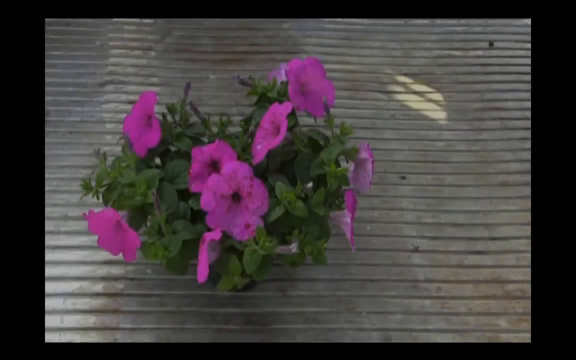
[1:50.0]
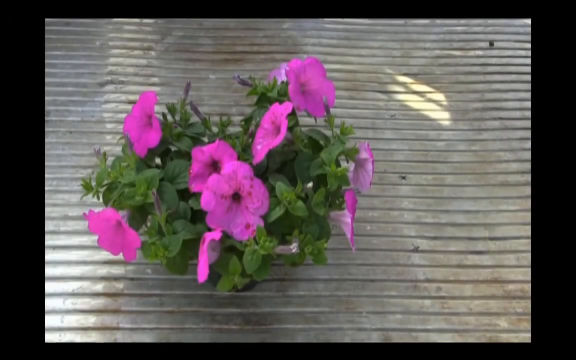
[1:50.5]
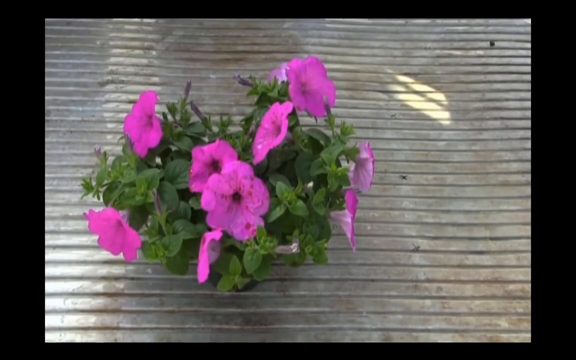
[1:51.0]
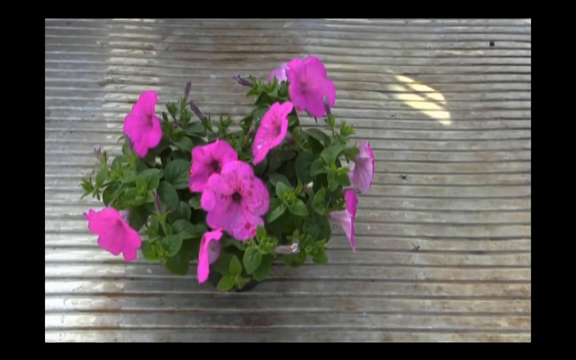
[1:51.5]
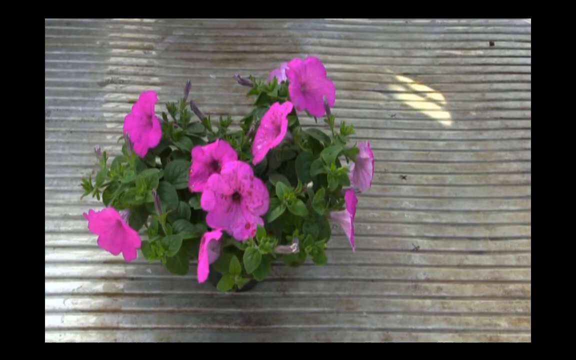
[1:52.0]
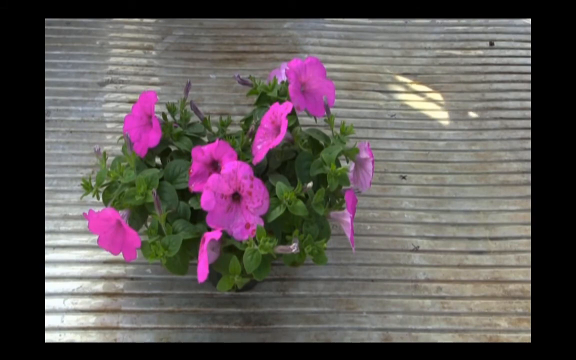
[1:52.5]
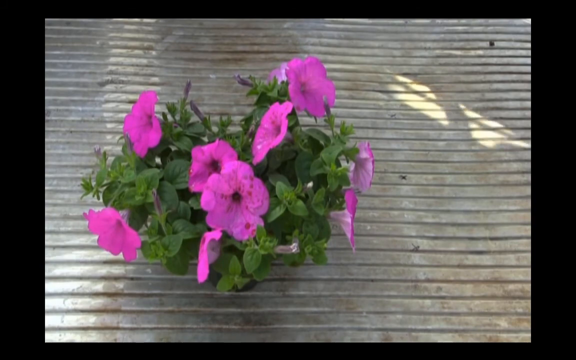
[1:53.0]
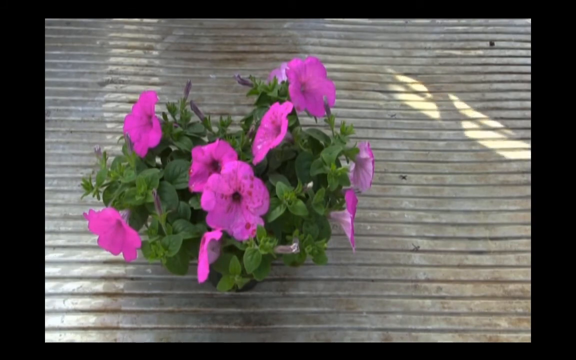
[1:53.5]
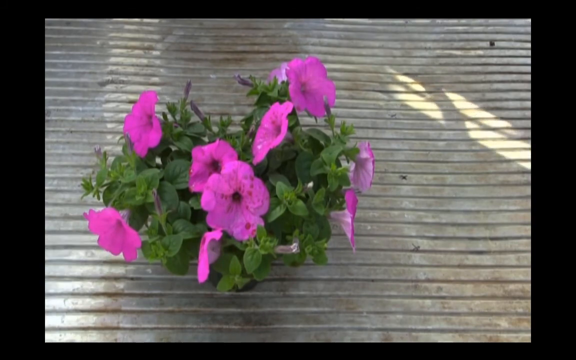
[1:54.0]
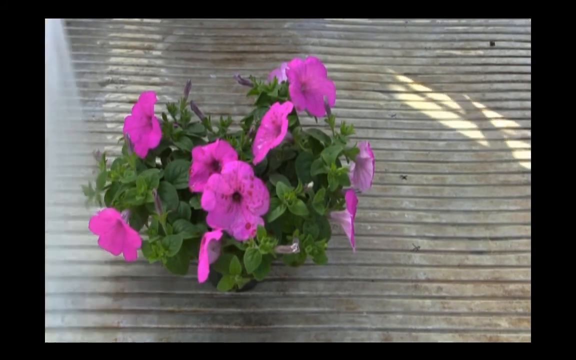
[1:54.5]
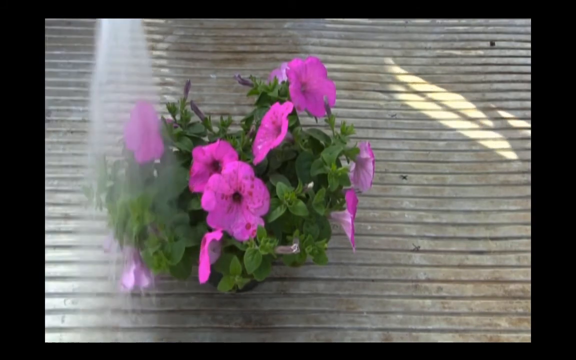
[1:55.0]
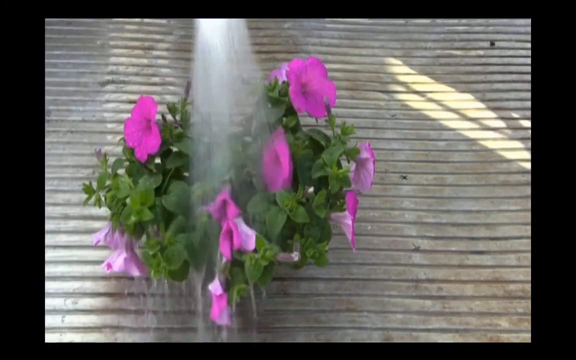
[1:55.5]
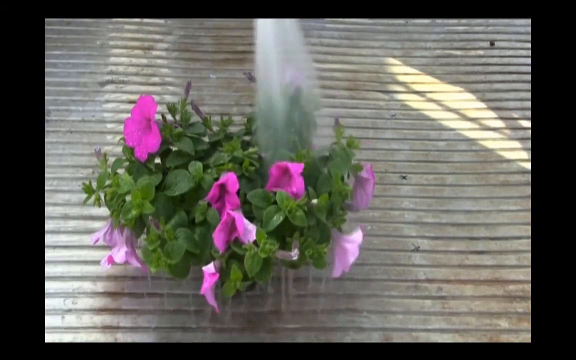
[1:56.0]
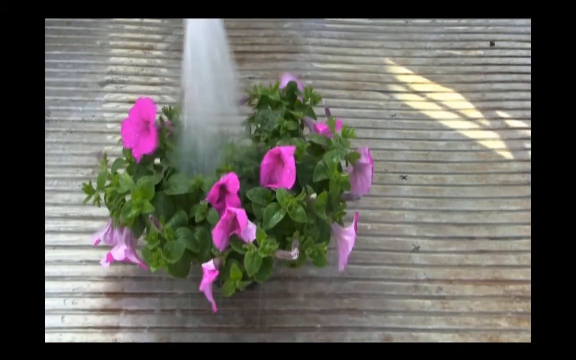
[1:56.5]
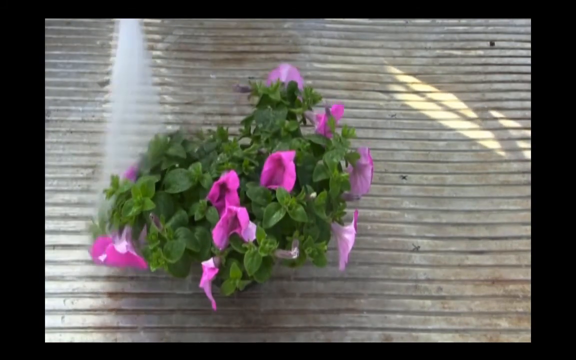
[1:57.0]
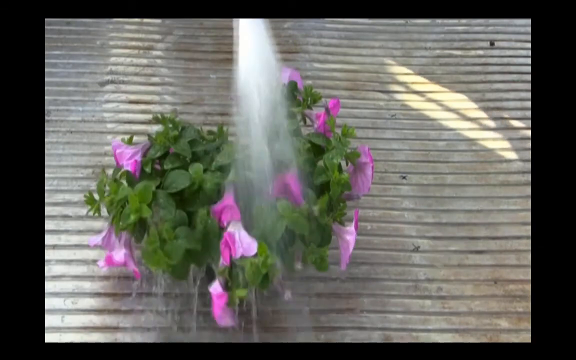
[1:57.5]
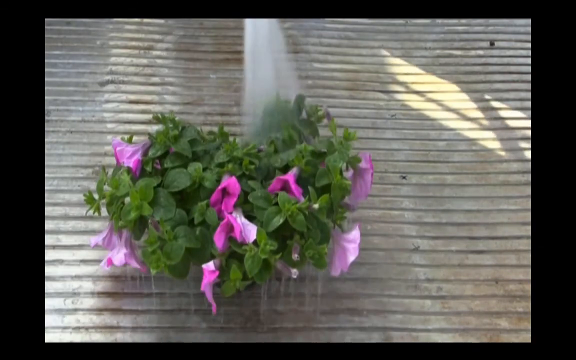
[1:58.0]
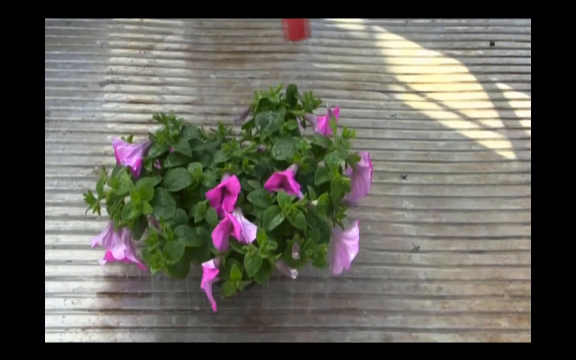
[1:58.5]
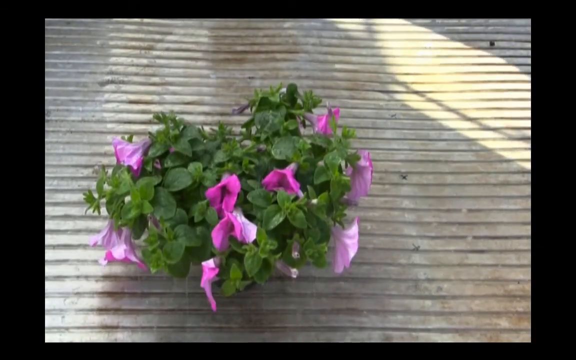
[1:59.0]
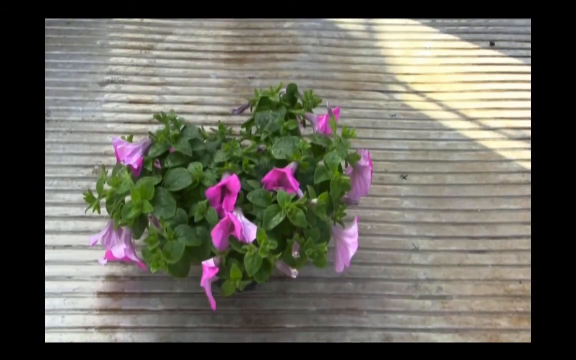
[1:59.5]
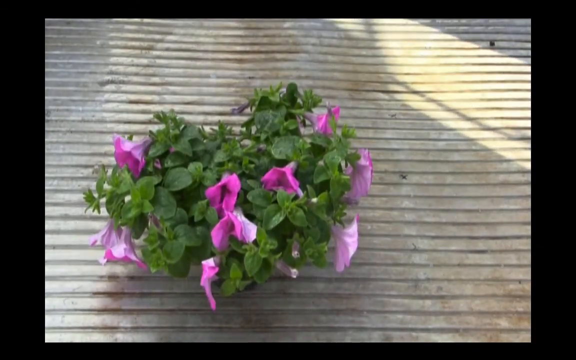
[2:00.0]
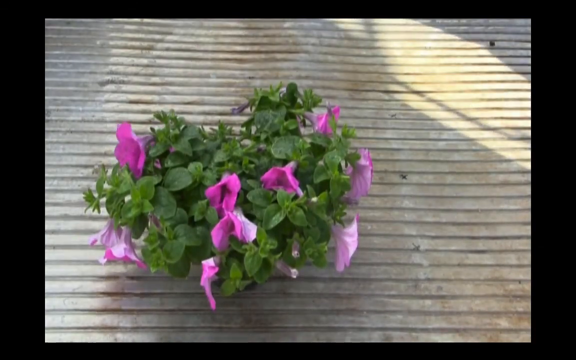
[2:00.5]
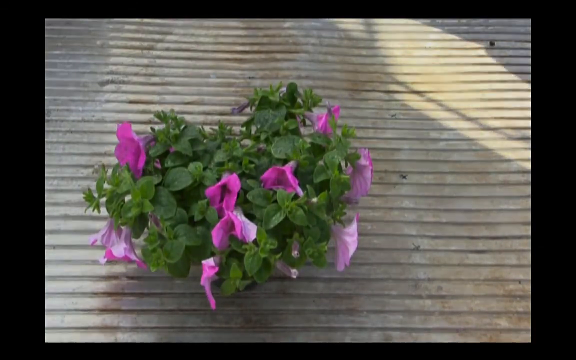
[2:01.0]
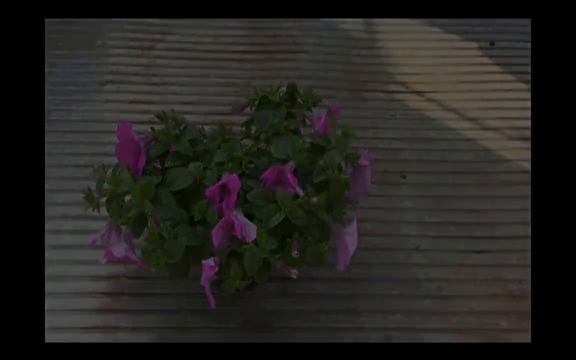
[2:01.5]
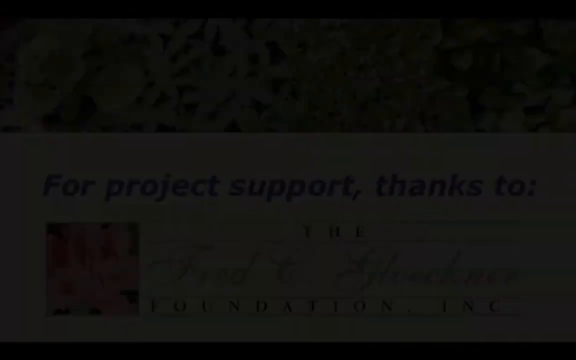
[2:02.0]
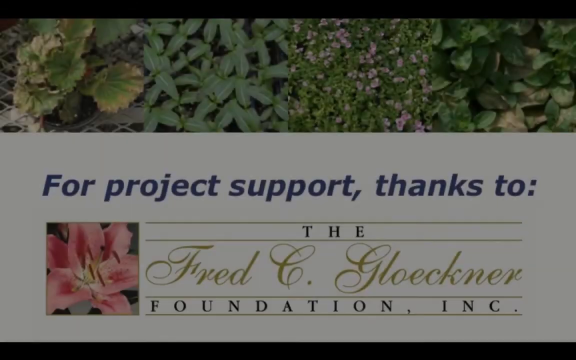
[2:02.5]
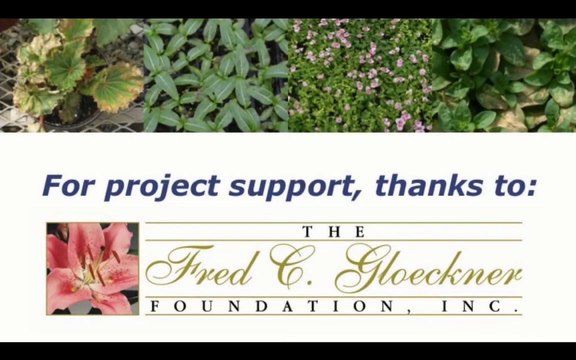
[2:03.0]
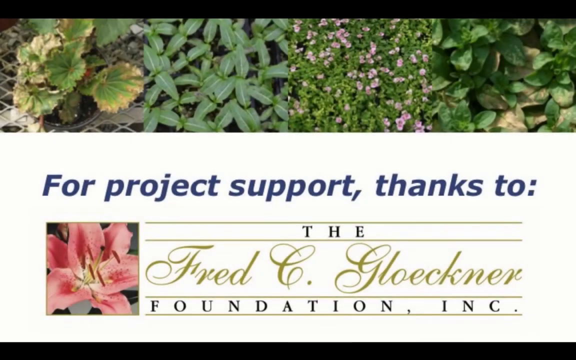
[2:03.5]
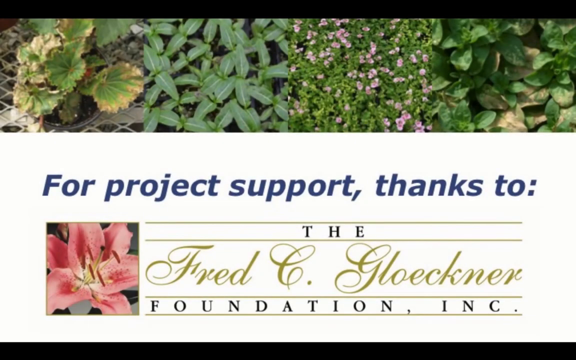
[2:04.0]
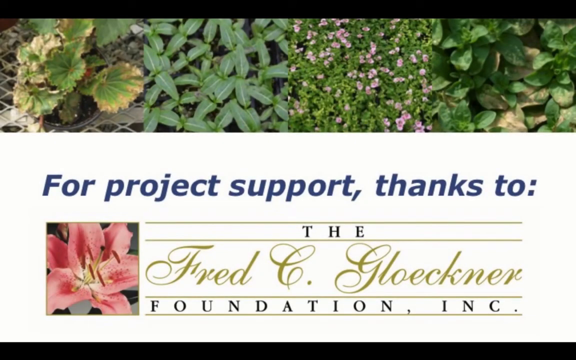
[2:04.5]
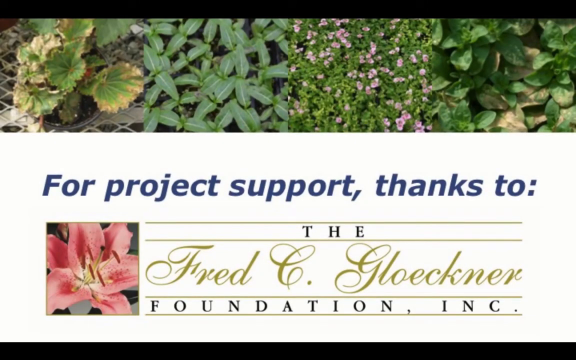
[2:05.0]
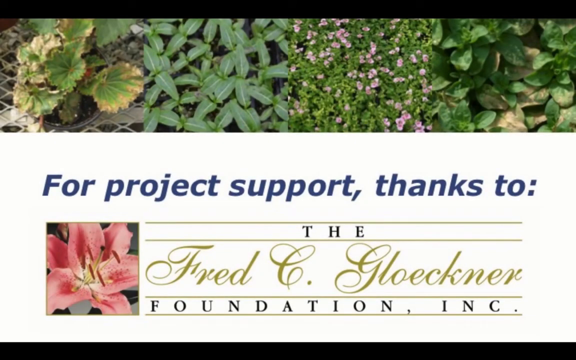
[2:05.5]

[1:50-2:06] A plant is in the shade on corrugated iron; it has green leaves and pink leaves, with the green leaves in the majority. A watering pipe appears and the flower is watered as the person waters from left to right and from top to bottom, with the green leaves seeming to collapse under the pressure of the water. Next, another page reads "for project support thanks to," followed by a name. This picture also shows flowers of different species from left to right: first a flower that is dry and looks bent, second a green flower, third a green flower with alternating areas of pink, and lastly a green flower among rocks.